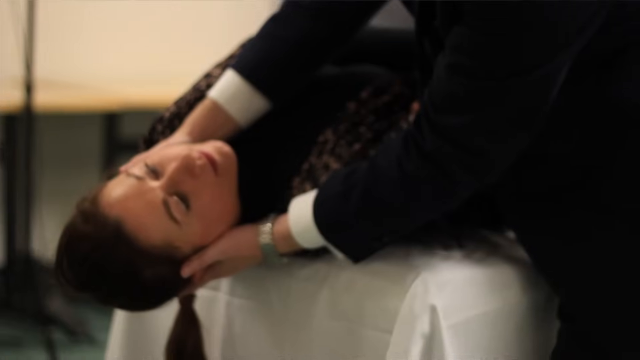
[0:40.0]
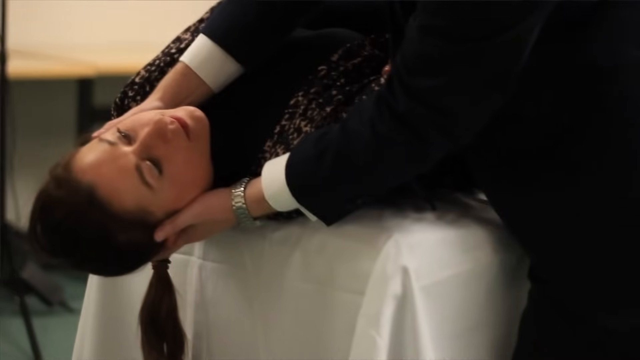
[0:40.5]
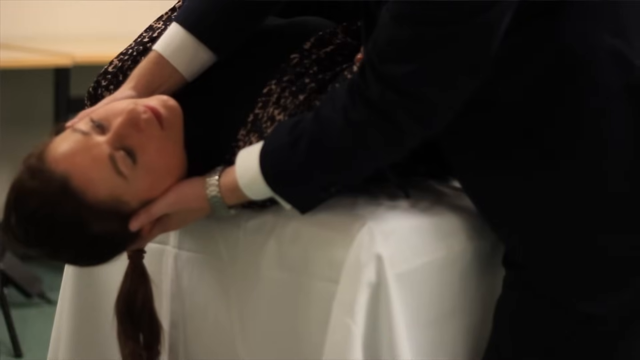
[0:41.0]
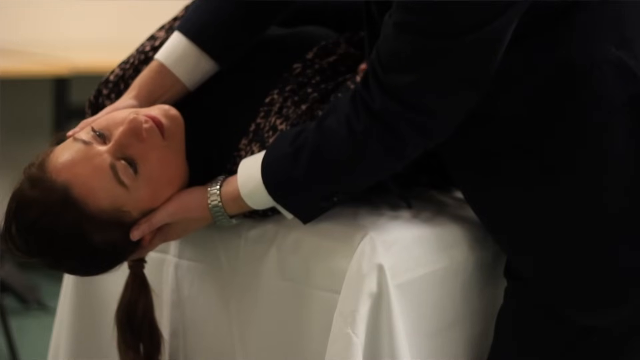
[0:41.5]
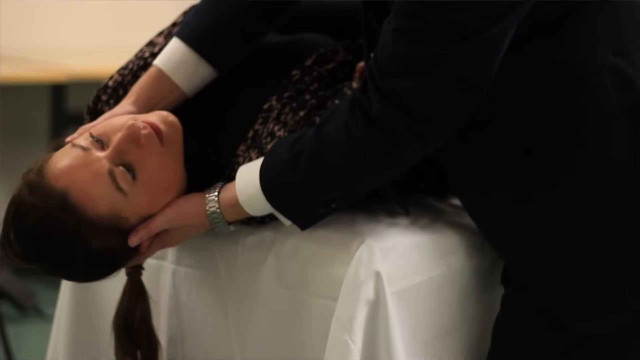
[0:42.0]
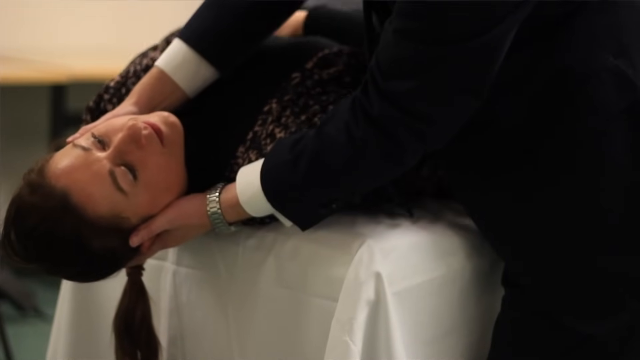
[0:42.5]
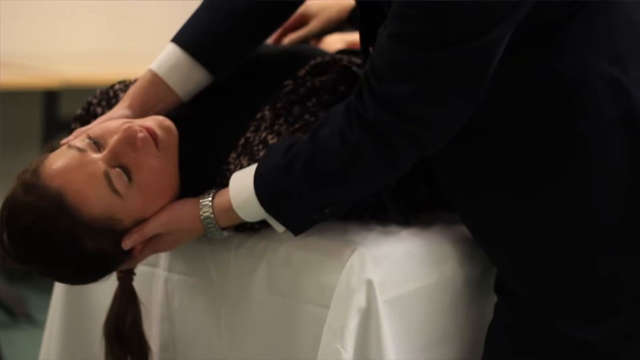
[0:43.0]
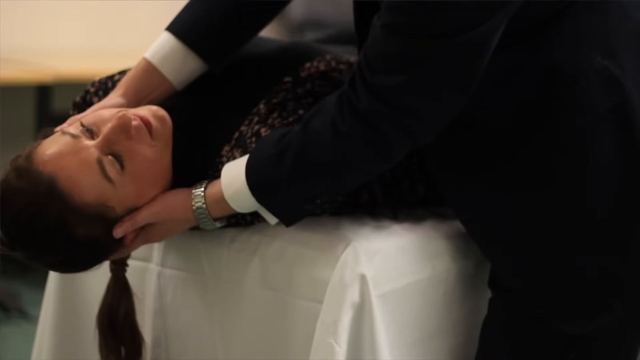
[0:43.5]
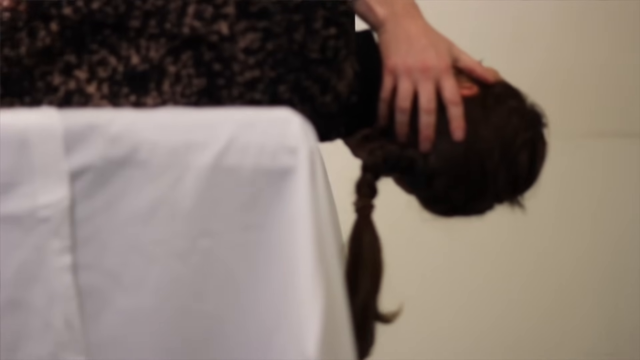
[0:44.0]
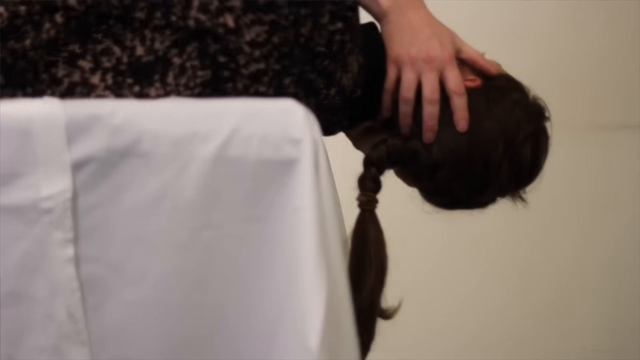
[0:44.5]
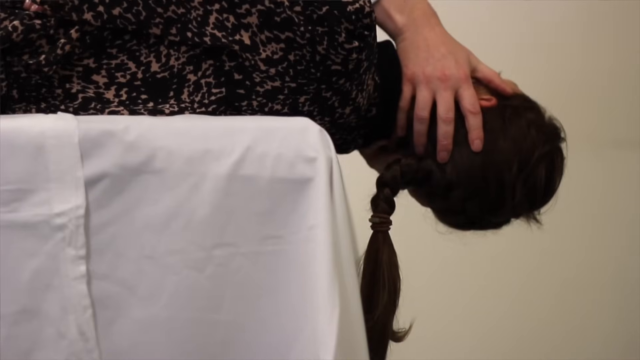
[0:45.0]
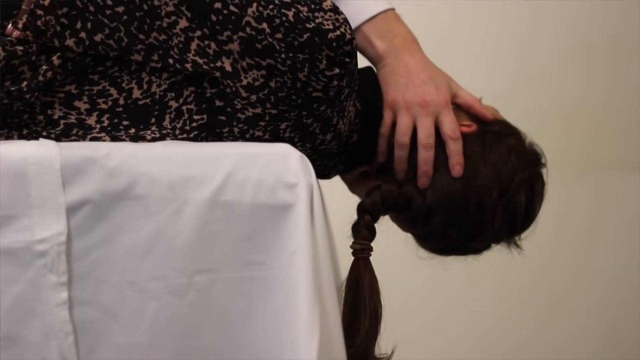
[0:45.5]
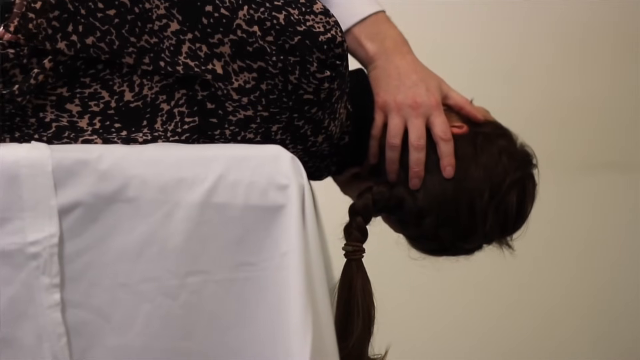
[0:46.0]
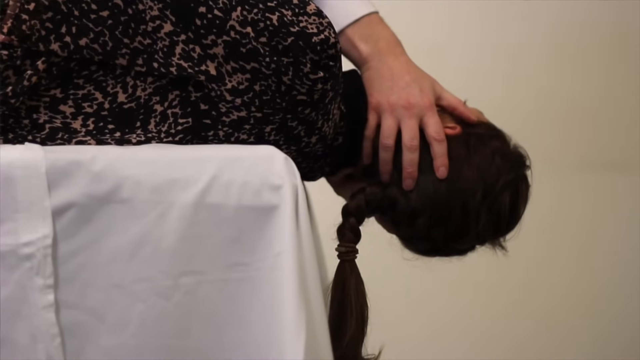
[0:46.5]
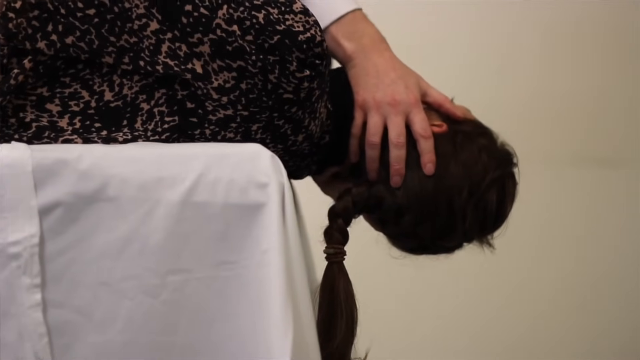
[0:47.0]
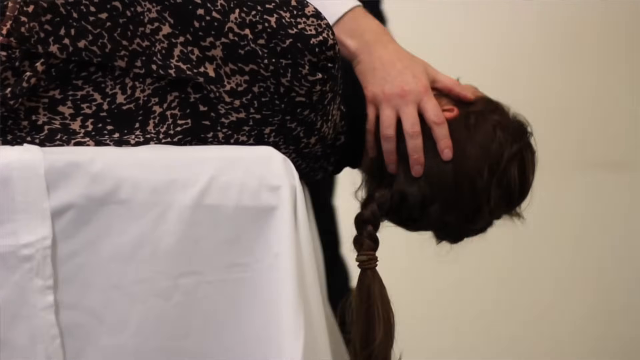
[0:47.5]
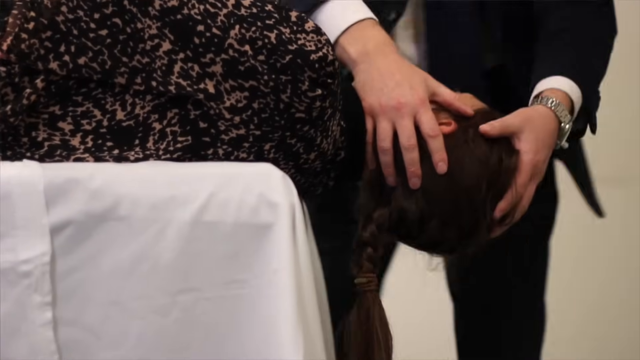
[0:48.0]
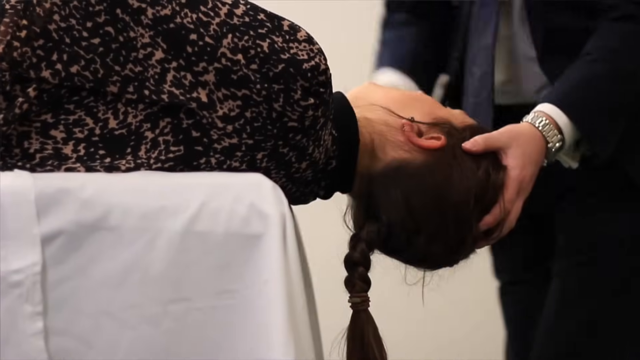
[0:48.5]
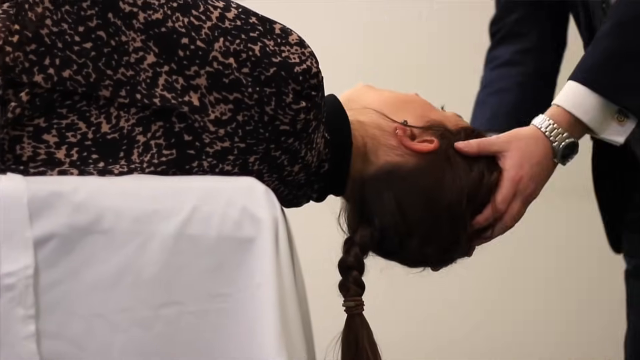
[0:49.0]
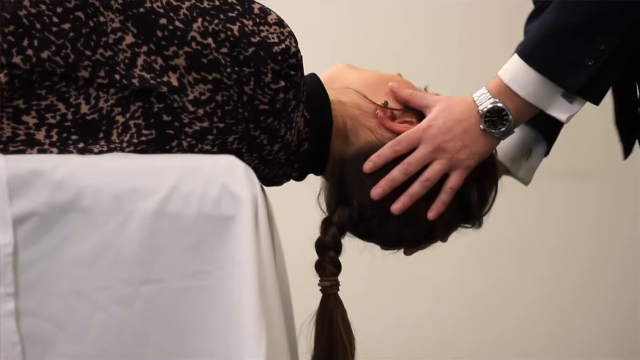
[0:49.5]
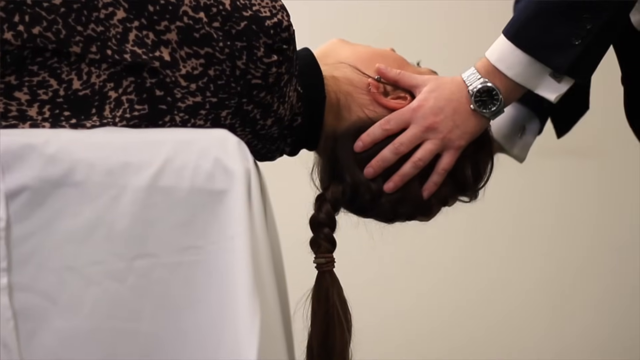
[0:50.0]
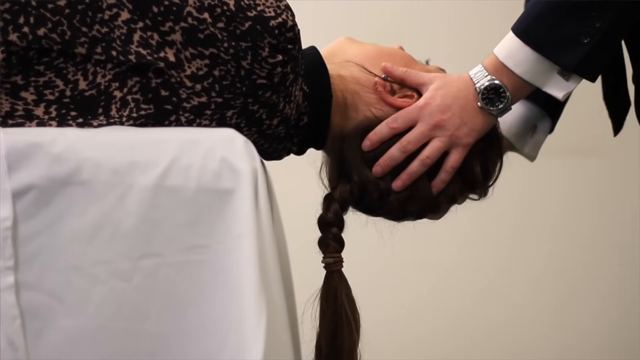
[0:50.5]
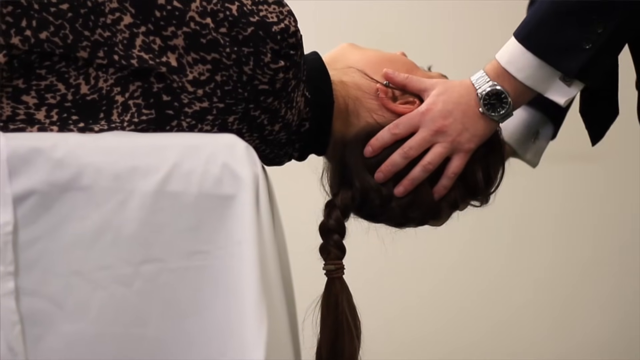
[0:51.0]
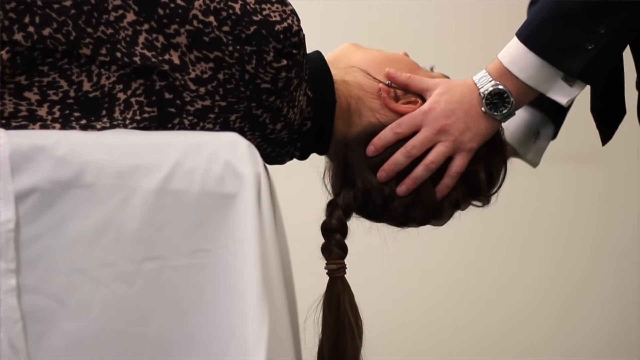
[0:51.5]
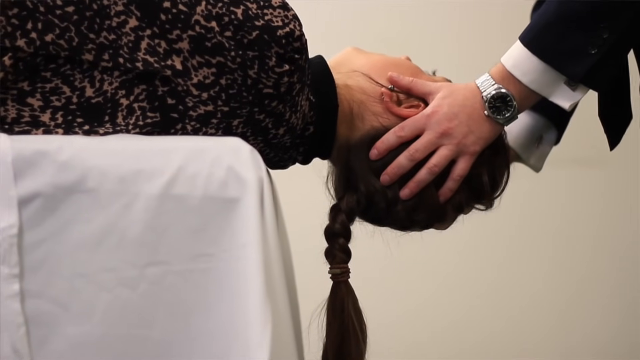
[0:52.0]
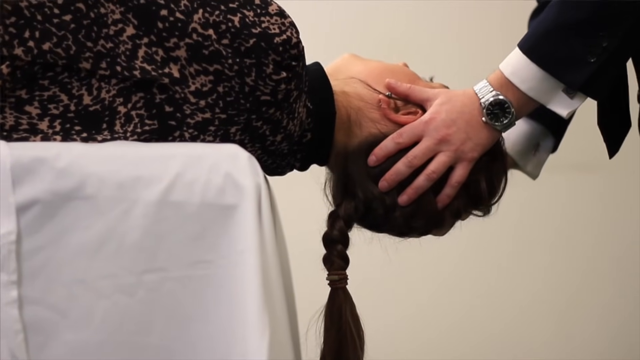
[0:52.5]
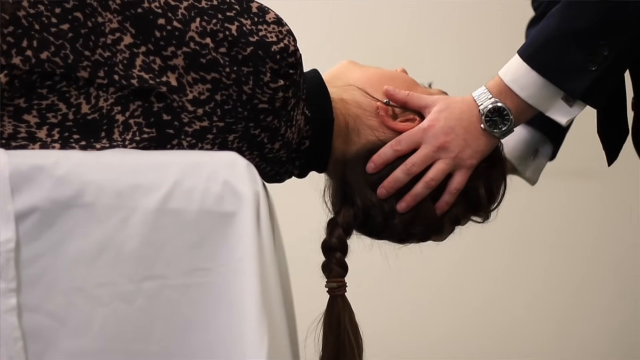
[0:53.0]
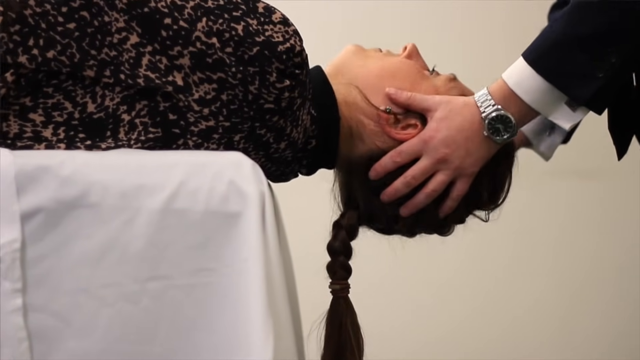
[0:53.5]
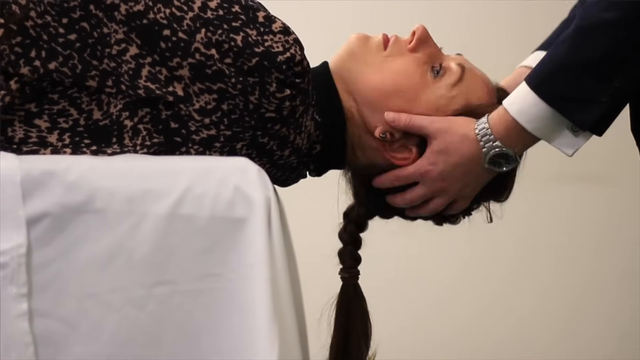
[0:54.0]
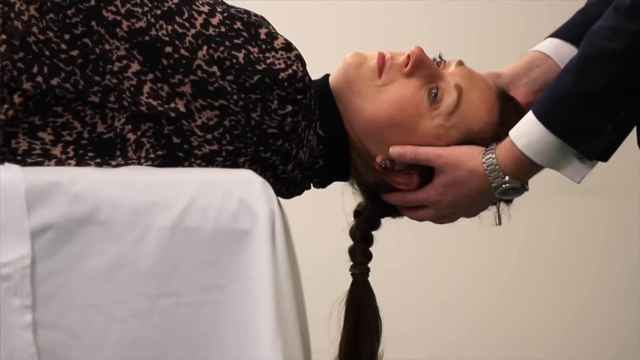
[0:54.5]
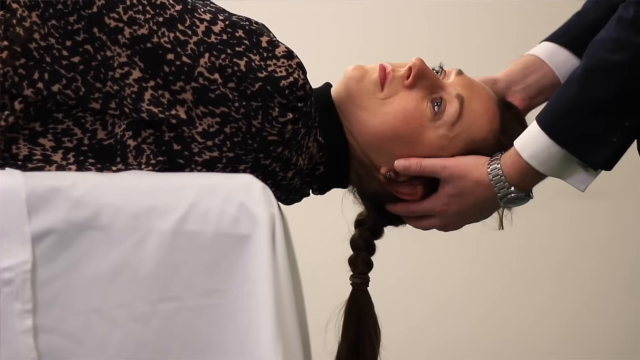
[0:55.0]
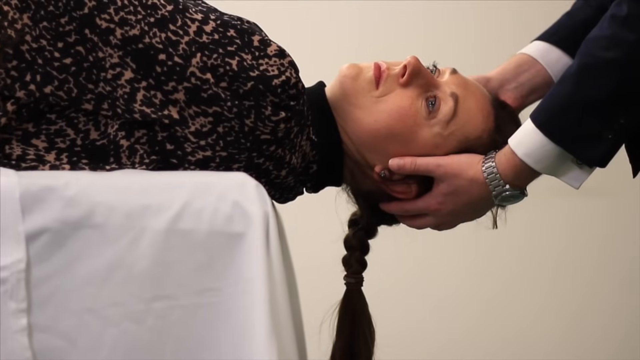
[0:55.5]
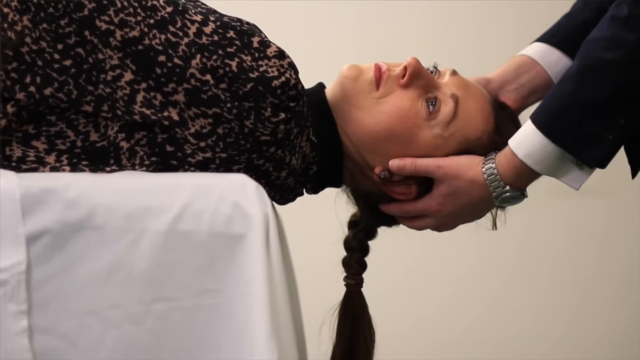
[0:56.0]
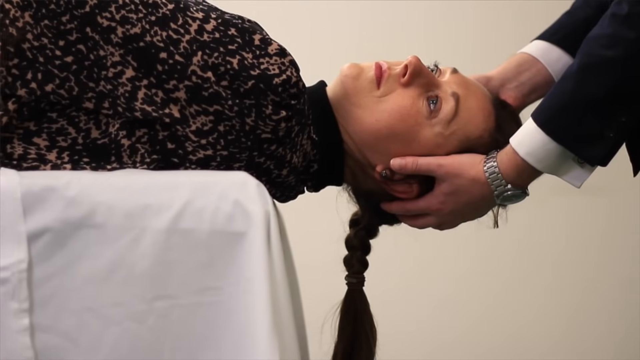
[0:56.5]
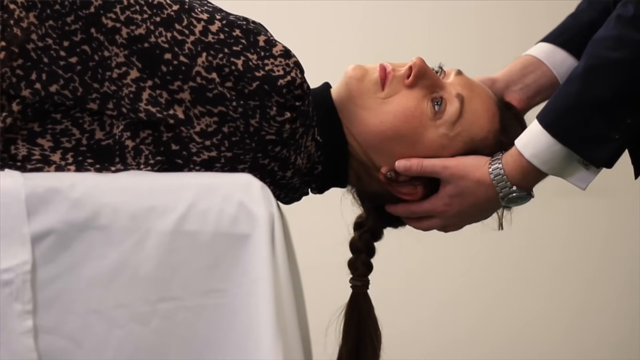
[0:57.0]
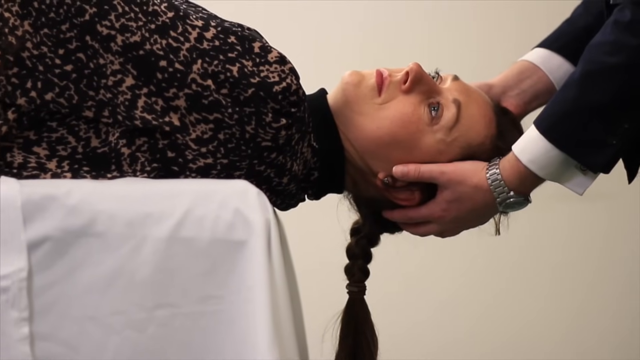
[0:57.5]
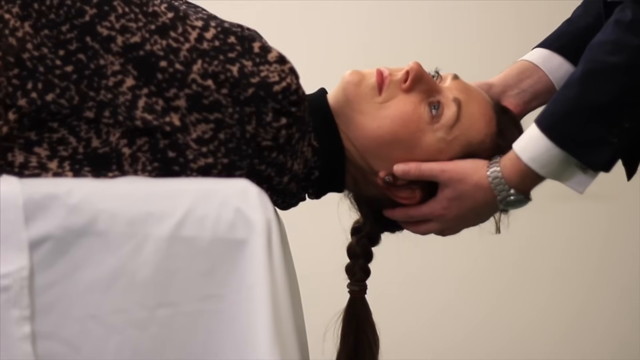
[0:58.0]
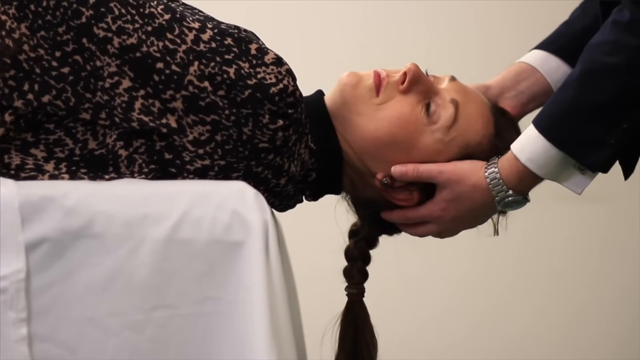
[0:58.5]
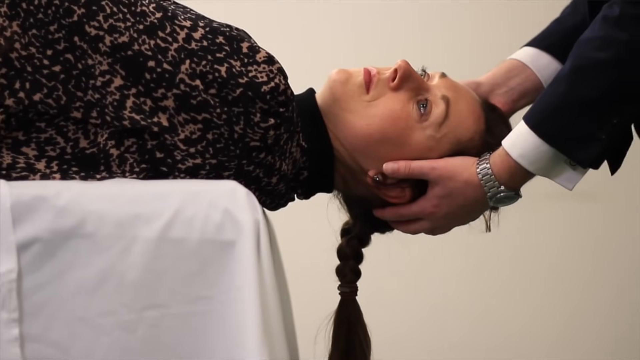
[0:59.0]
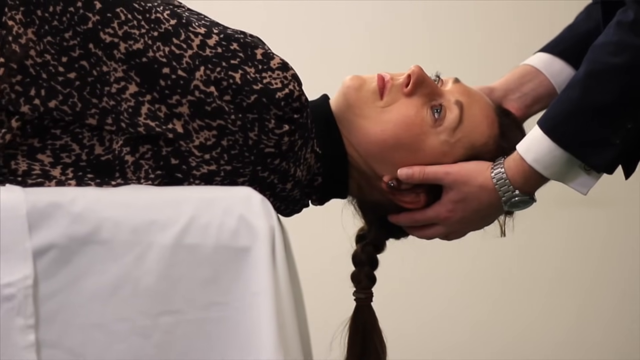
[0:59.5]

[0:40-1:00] The two are on a patient exam table covered with a white cloth. The woman, who was sitting on the table, is brought down by the doctor, who keeps holding her head with both his right and left hands. Her head hangs off the table as he holds it, and he holds it to the right. The camera shows the scene from a different angle, and he moves behind her, still holding her head on one side, then switches her head to the other side. She has very dark hair in a French braid. He leans over her, holding her head tilted to the right so she looks to the right side. Then he quickly moves around and brings her into the middle of the table, still in the same room, and gets behind her head, still holding it.